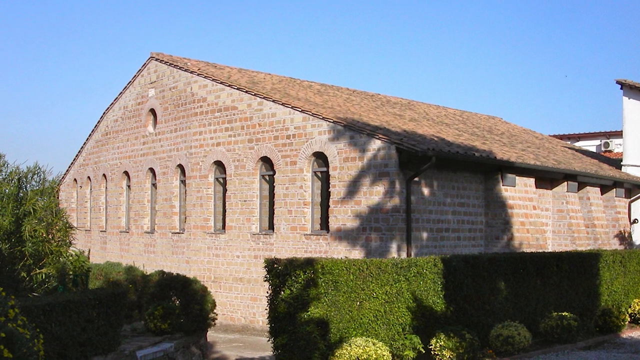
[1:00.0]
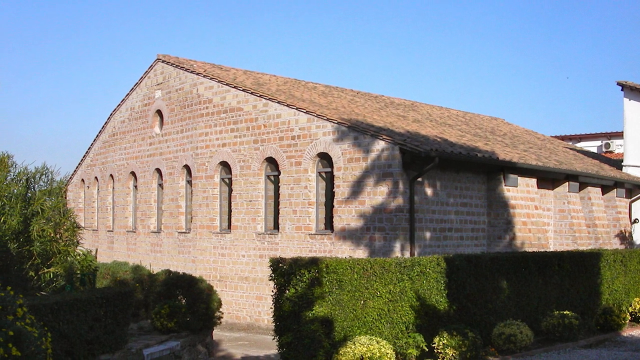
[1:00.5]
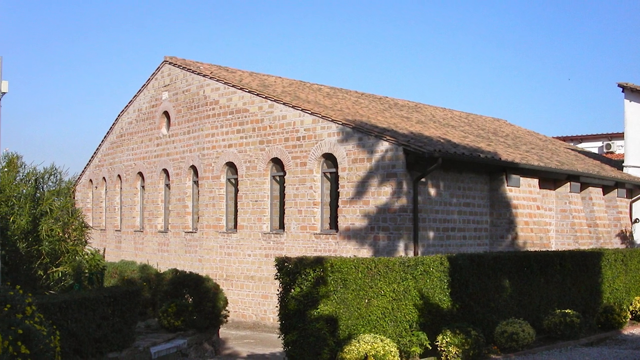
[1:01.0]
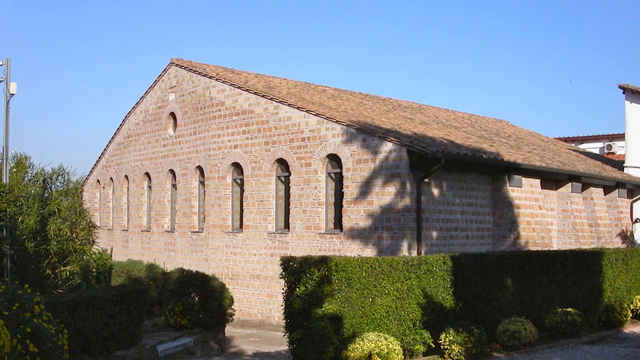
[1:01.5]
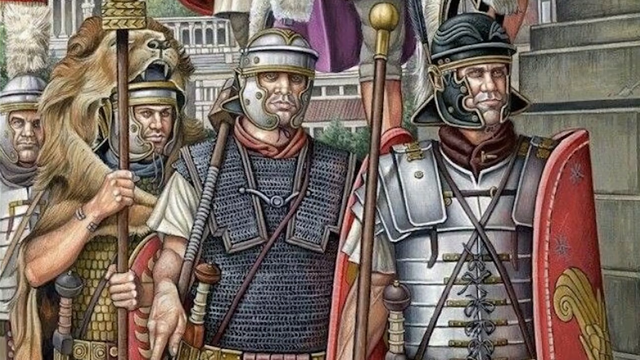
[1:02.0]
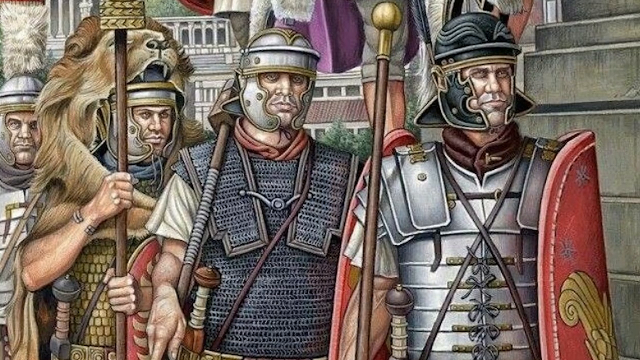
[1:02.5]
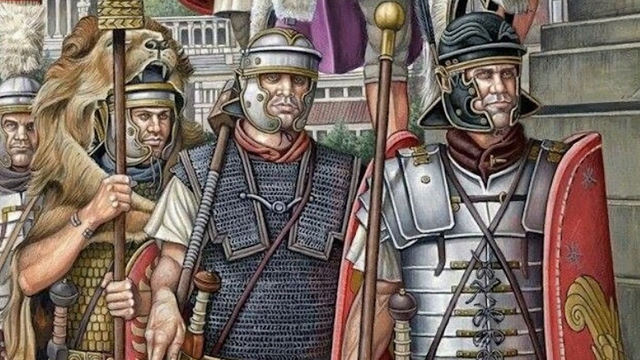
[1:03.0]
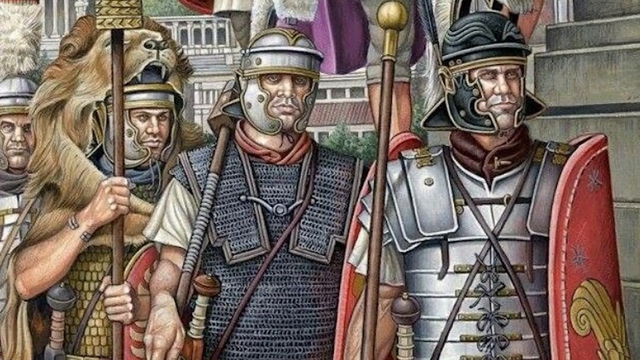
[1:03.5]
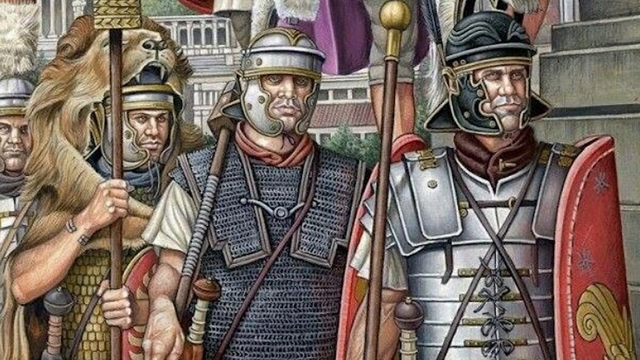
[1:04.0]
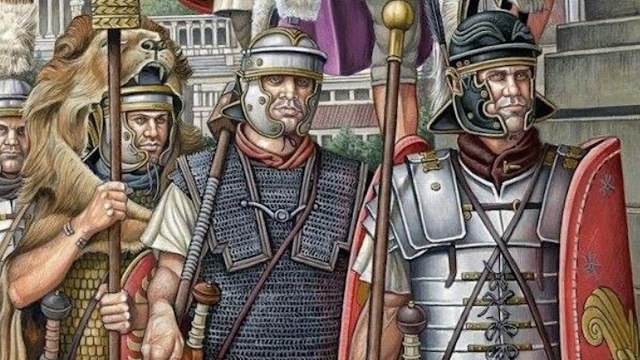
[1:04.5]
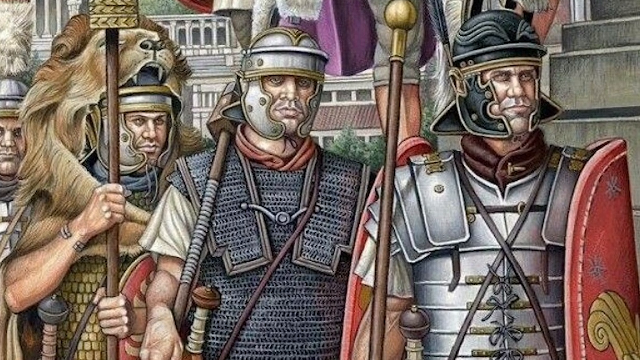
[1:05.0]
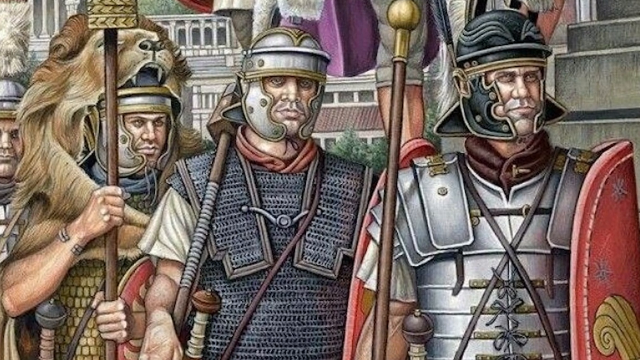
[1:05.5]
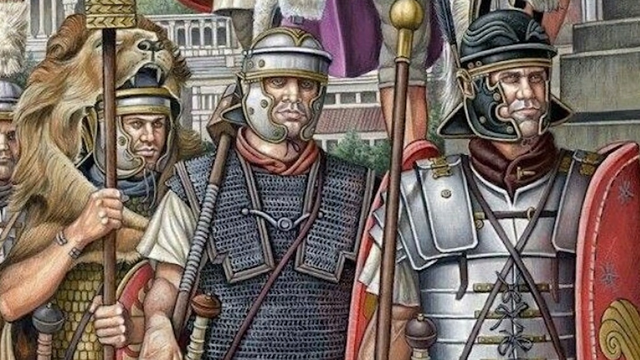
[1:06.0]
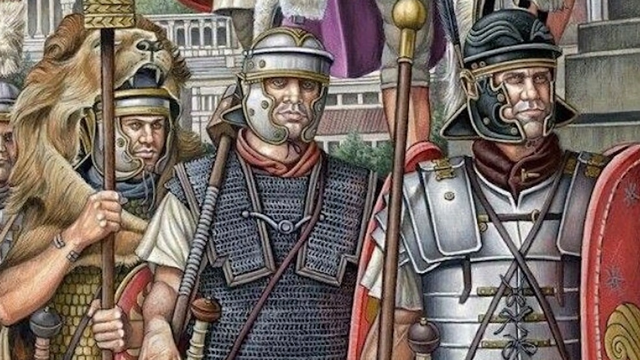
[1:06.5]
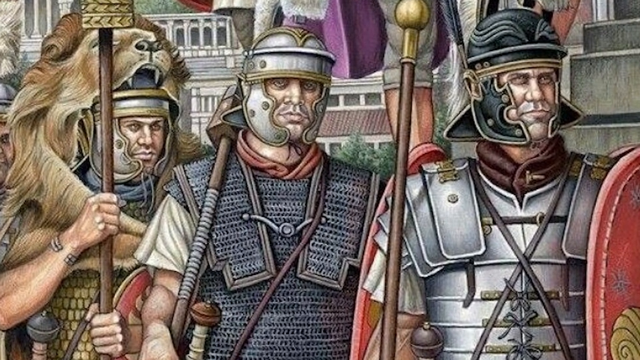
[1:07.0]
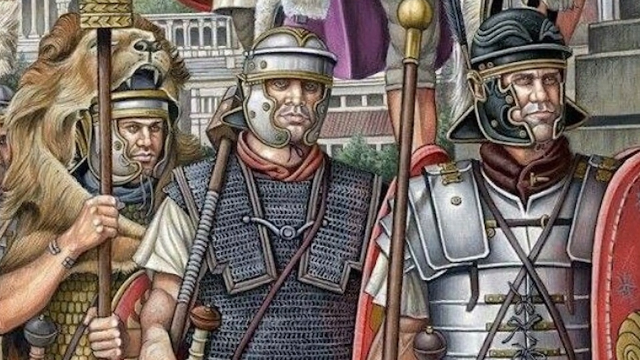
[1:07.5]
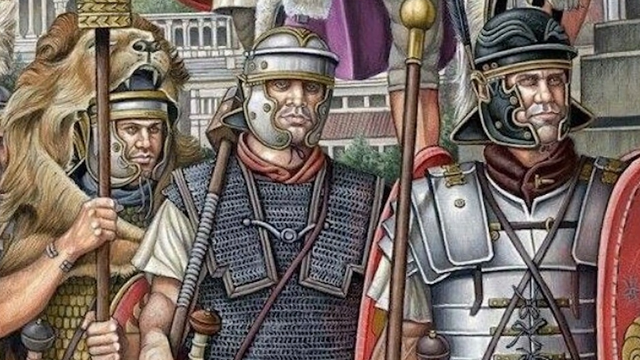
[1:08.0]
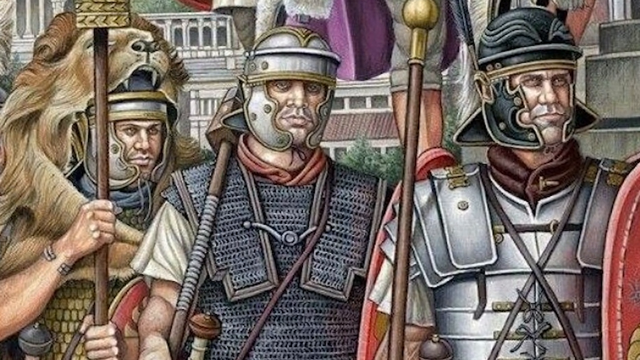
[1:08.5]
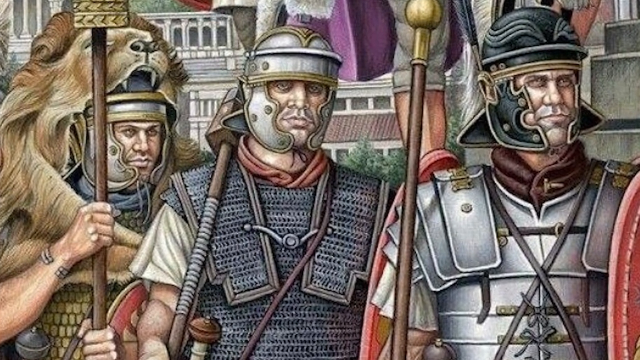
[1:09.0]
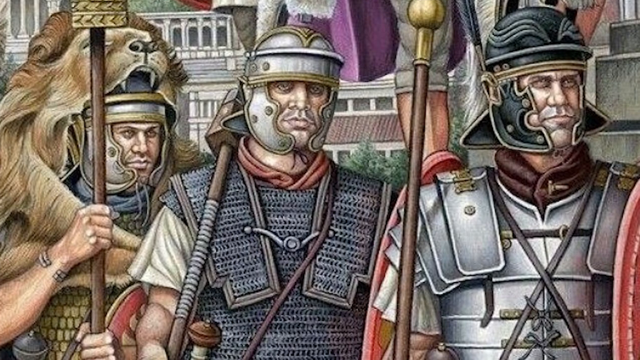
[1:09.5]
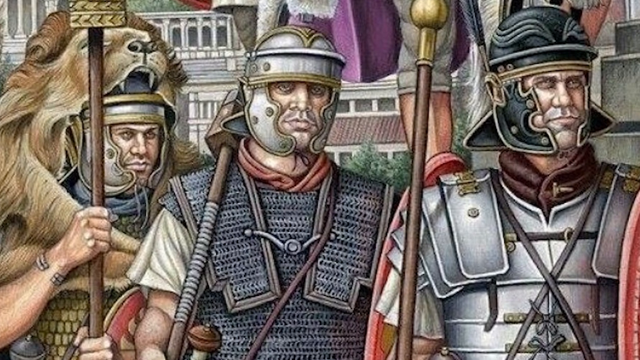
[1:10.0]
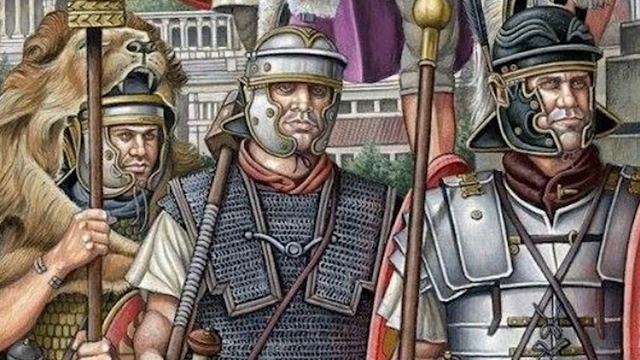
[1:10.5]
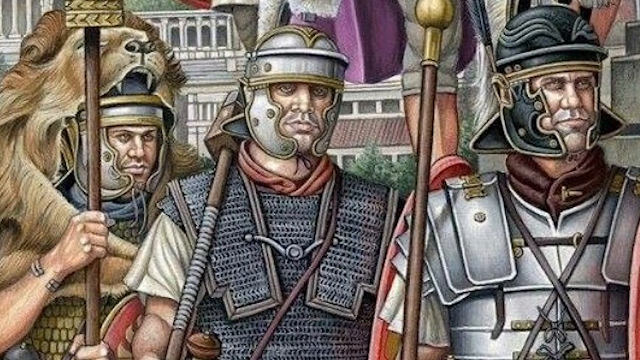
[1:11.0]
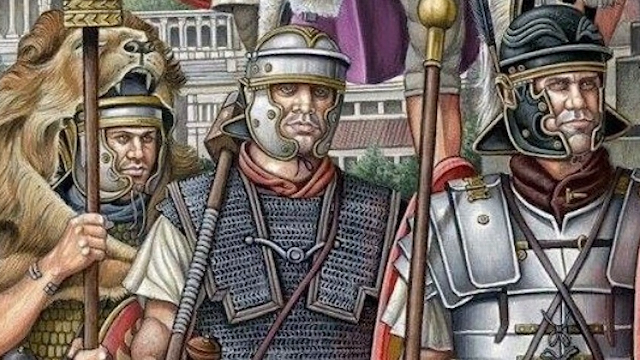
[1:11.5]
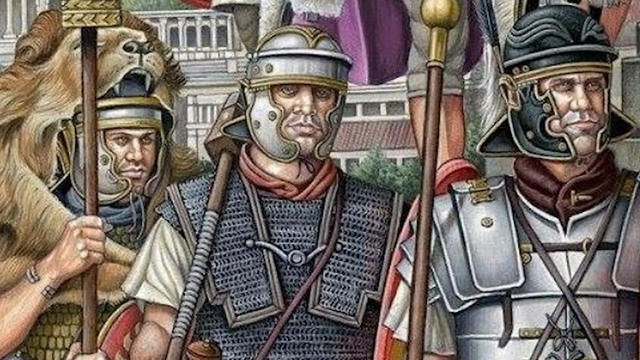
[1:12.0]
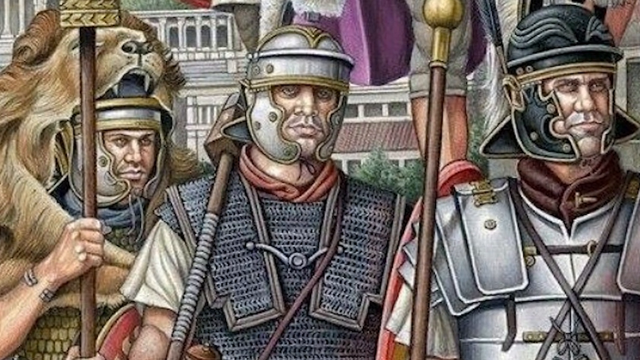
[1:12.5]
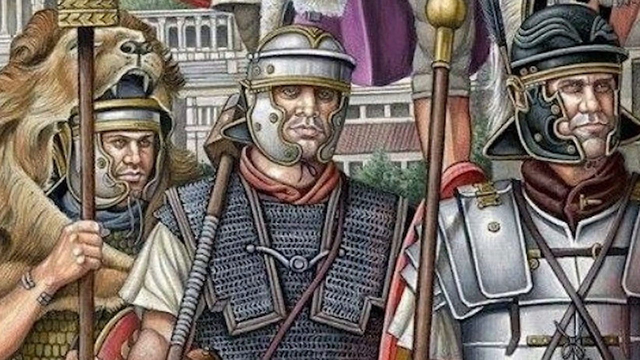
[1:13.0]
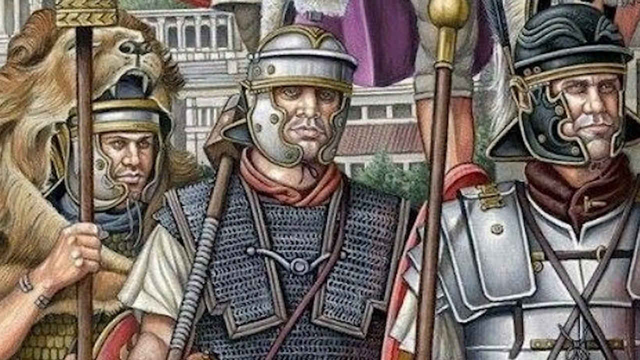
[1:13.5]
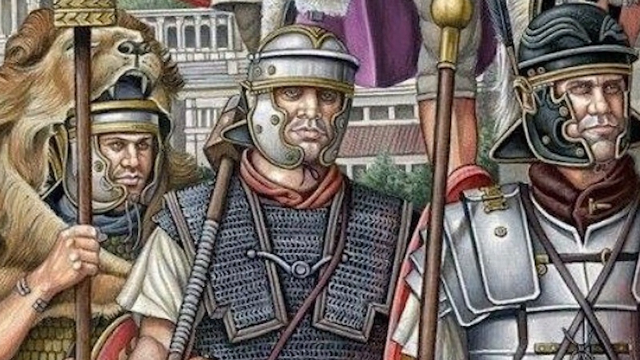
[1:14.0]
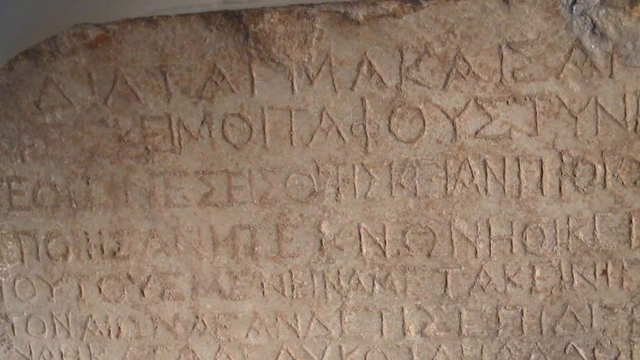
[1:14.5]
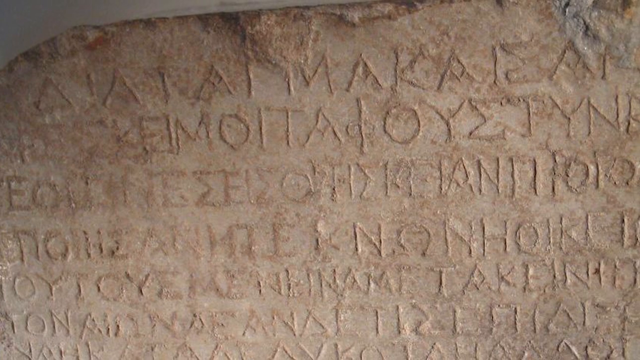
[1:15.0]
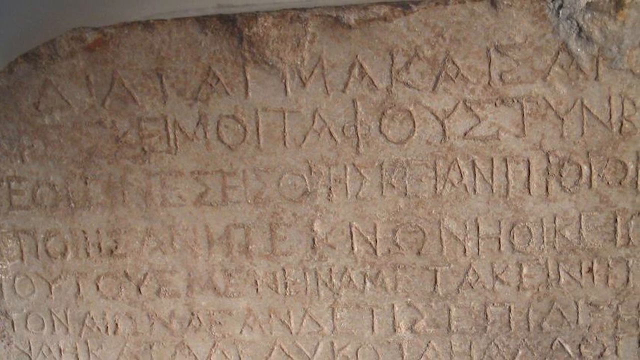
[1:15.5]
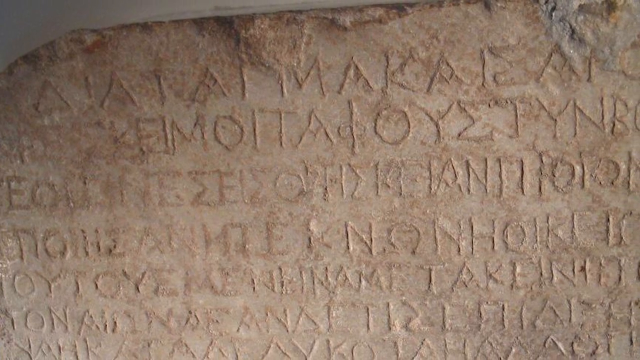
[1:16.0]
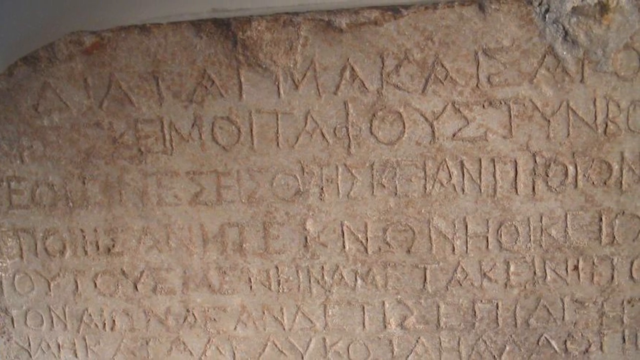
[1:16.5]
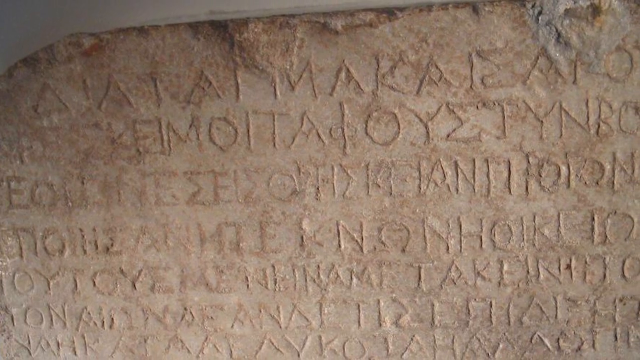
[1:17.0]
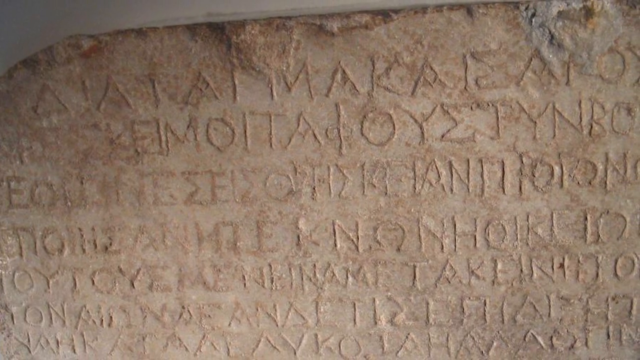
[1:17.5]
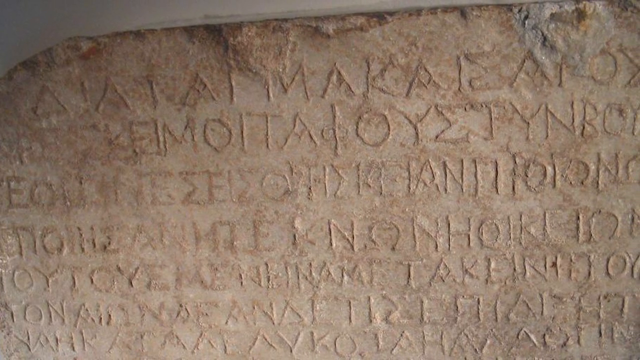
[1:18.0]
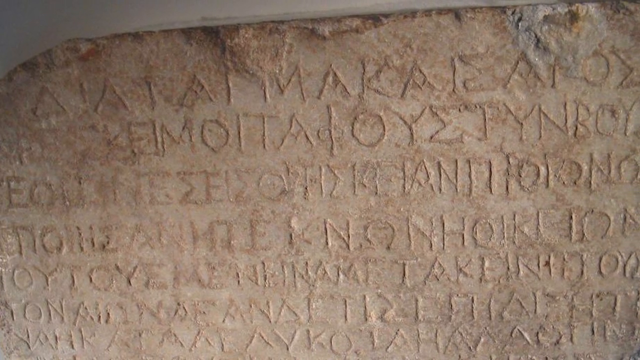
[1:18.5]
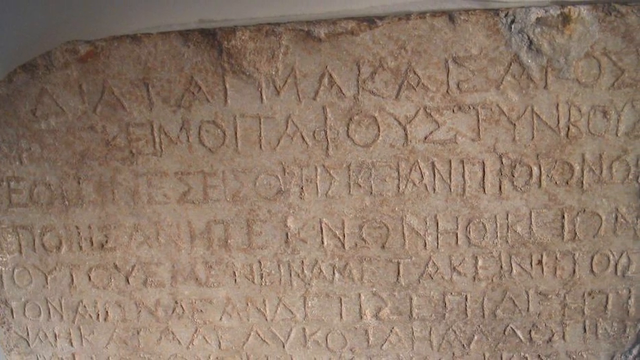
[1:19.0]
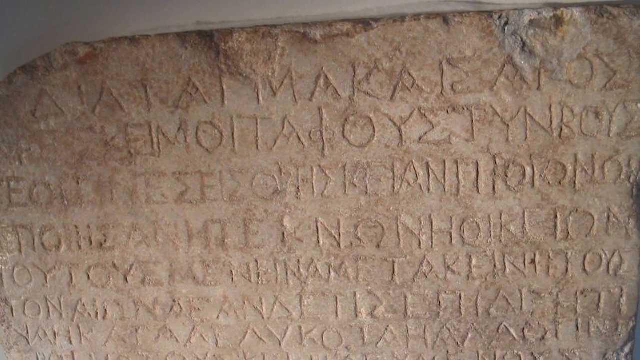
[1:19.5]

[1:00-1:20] Three images are shown. The first is a photograph of the exterior of a brick building that looks quite old and could potentially be a church, though it is hard to tell. On one side of the building are nine windows in a single line, with a smaller round window above them. The roof is tiled, hedges surround the building, and the sky is a clear blue. The next image is a drawing of a painting of four men dressed as soldiers, all wearing metal helmets, carrying some sort of weapon and holding a red shield in their left hand. One of the men wears a lion's head on top of his helmet. They are standing outside a grey building. The final image shows a slab of stone with some symbols carved into it.